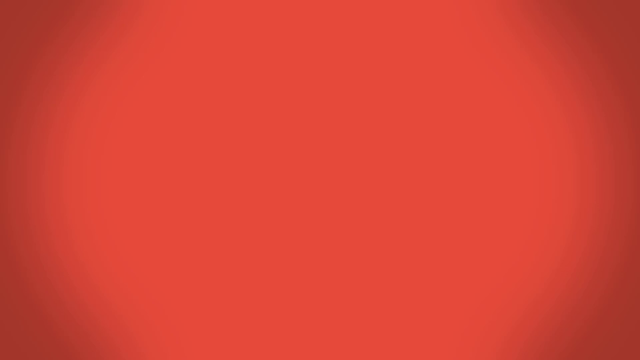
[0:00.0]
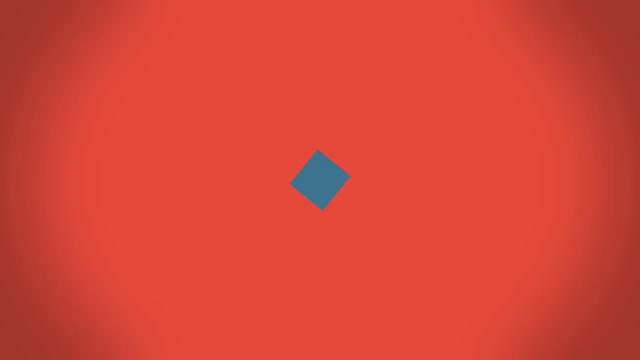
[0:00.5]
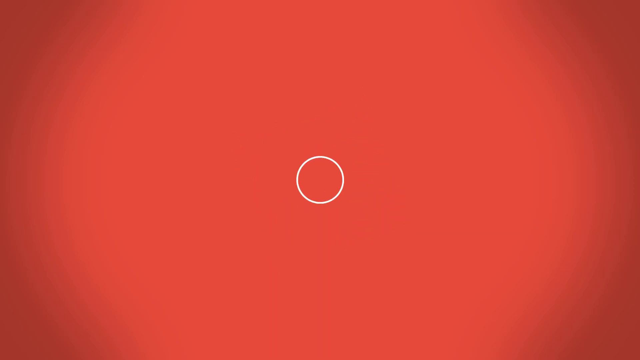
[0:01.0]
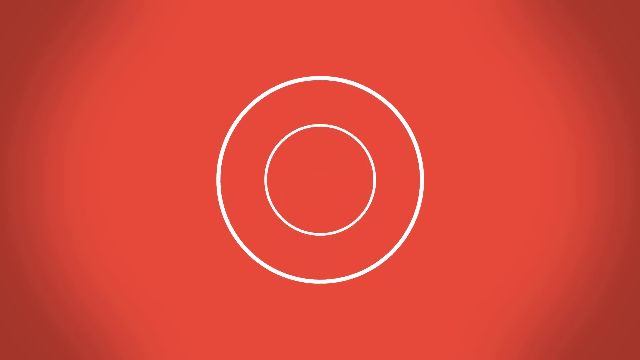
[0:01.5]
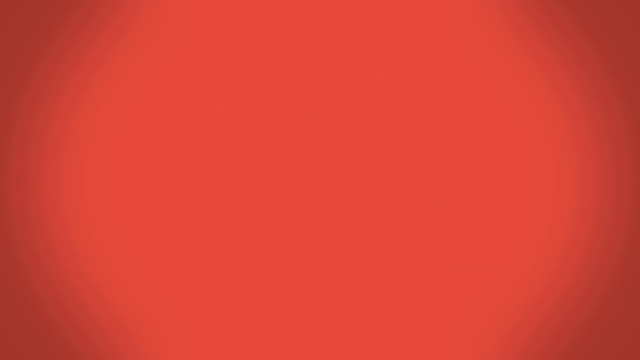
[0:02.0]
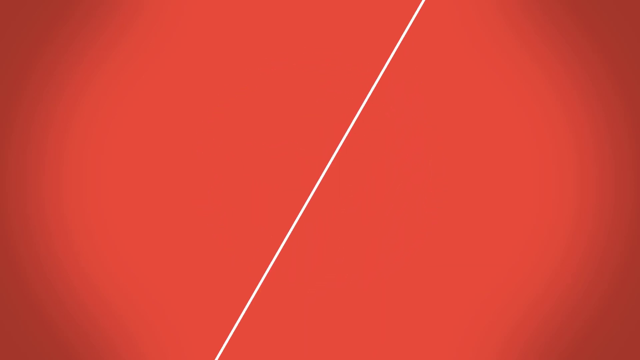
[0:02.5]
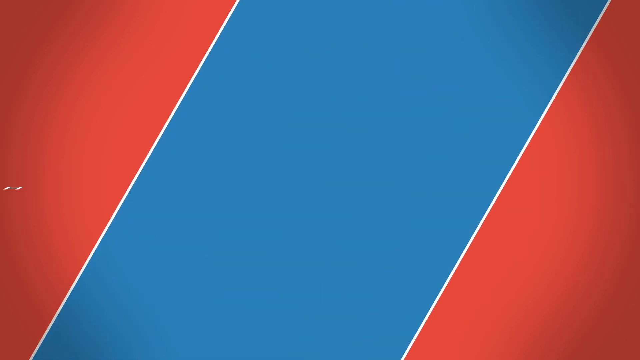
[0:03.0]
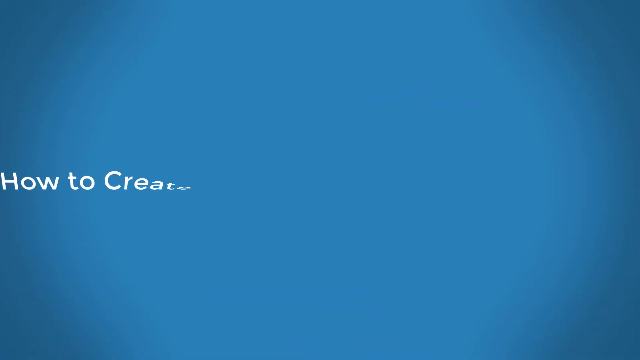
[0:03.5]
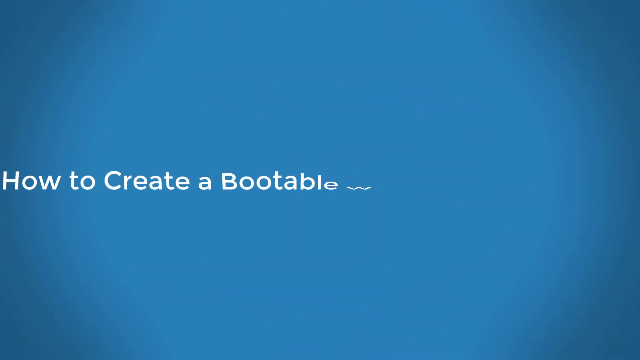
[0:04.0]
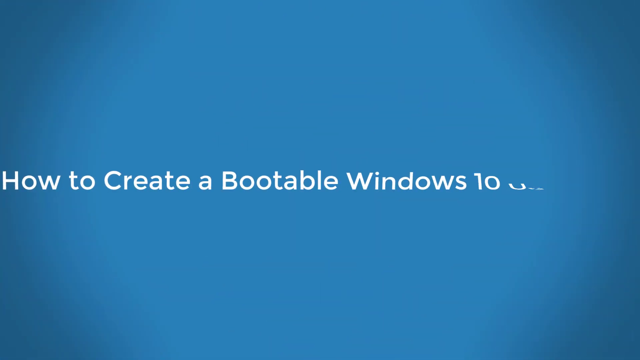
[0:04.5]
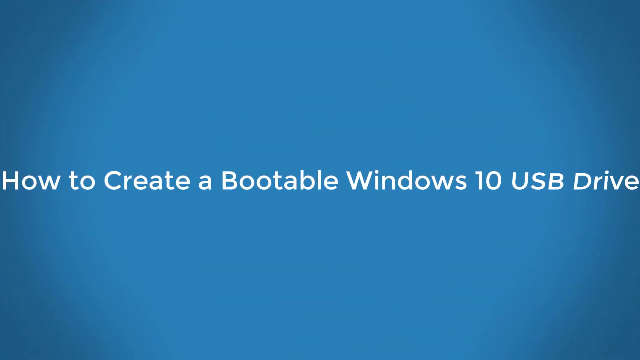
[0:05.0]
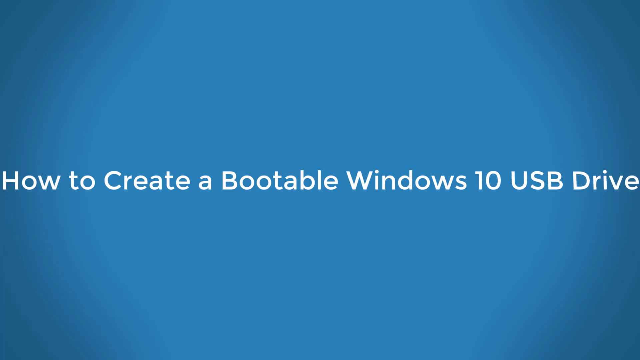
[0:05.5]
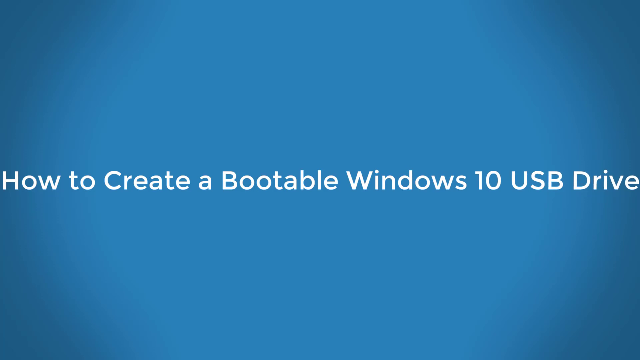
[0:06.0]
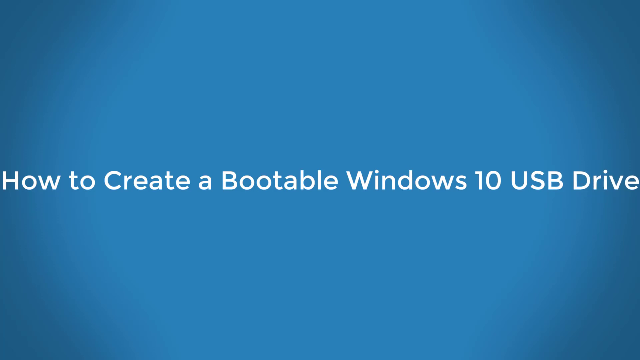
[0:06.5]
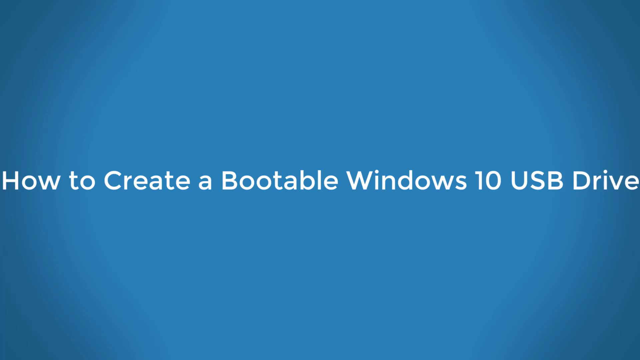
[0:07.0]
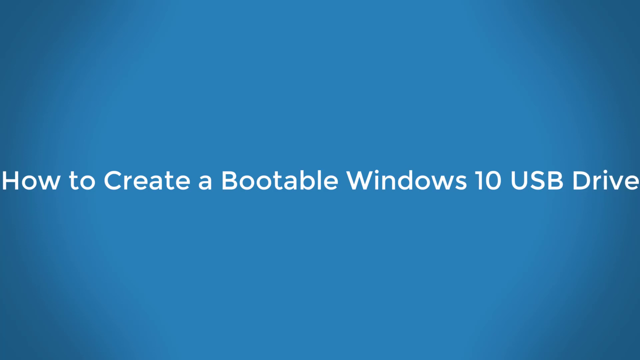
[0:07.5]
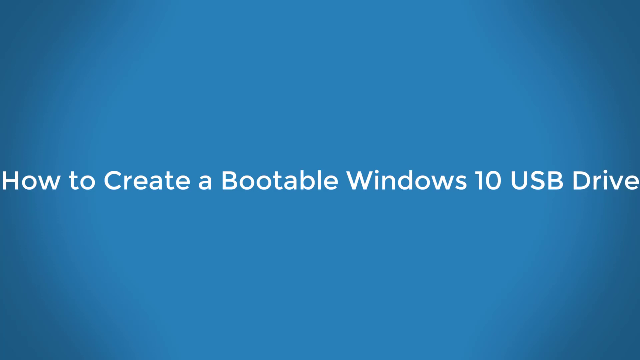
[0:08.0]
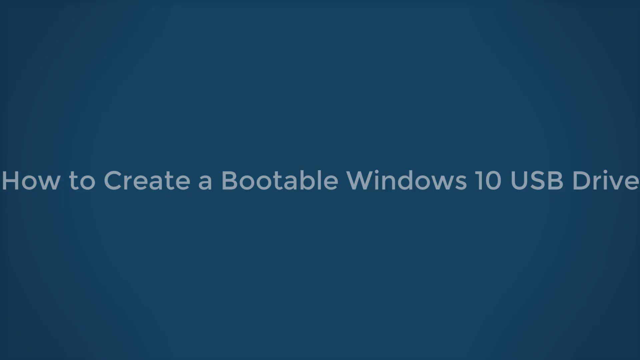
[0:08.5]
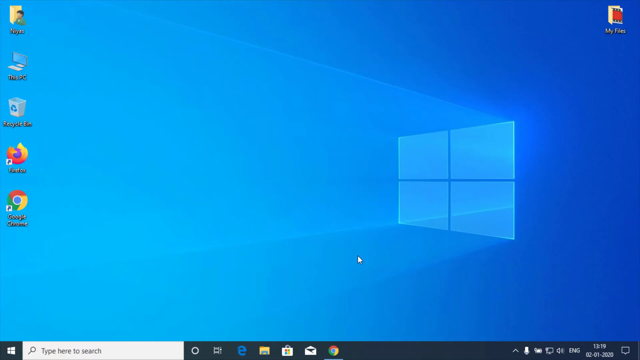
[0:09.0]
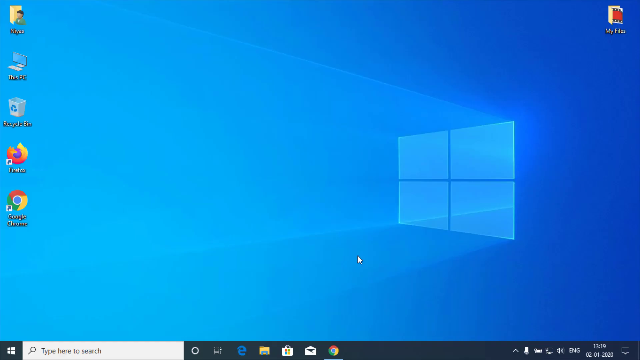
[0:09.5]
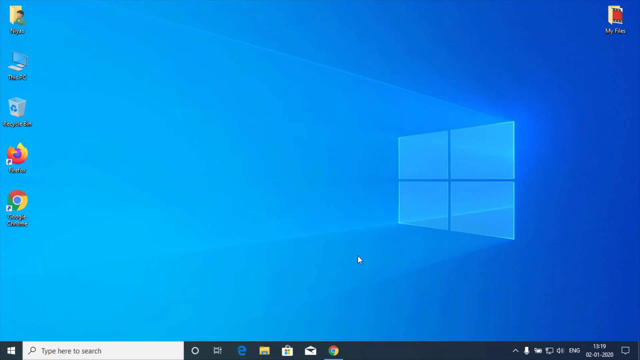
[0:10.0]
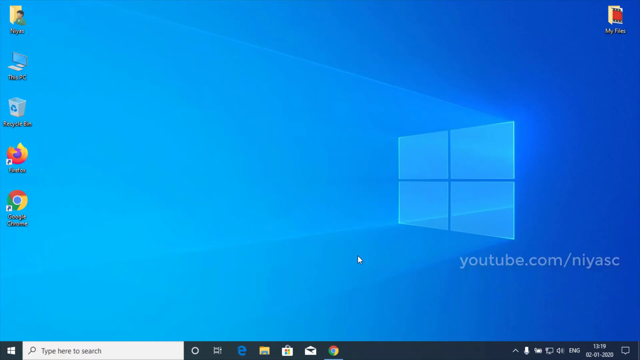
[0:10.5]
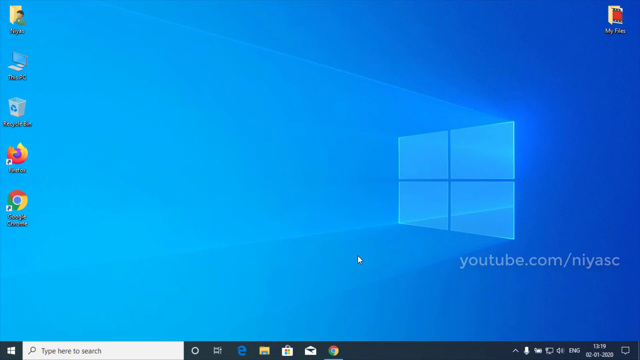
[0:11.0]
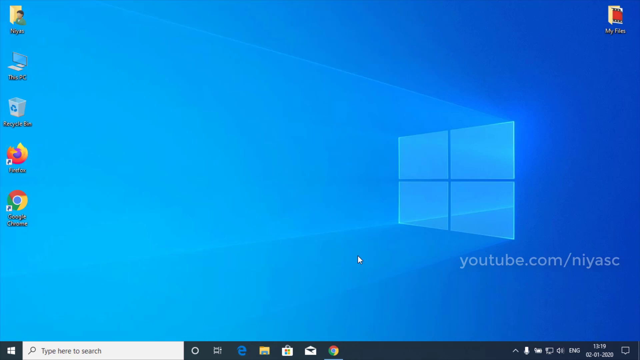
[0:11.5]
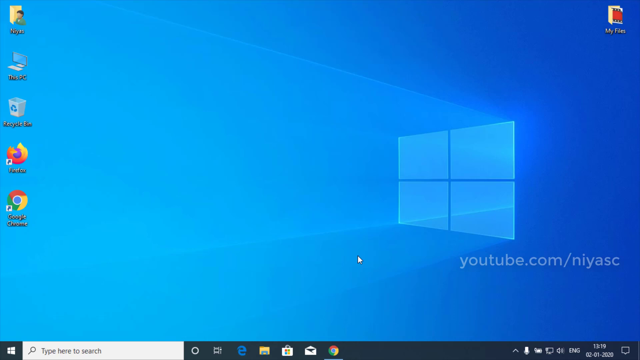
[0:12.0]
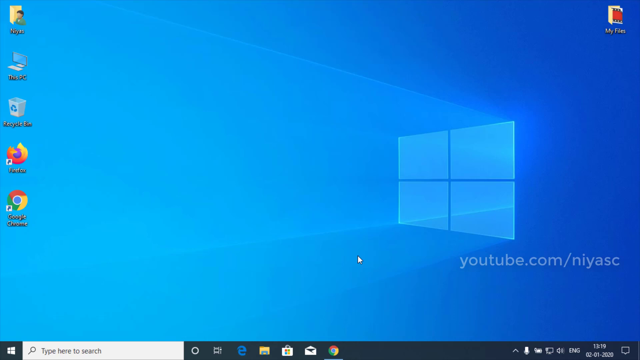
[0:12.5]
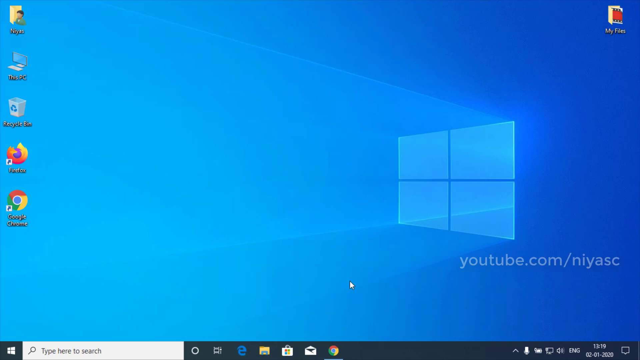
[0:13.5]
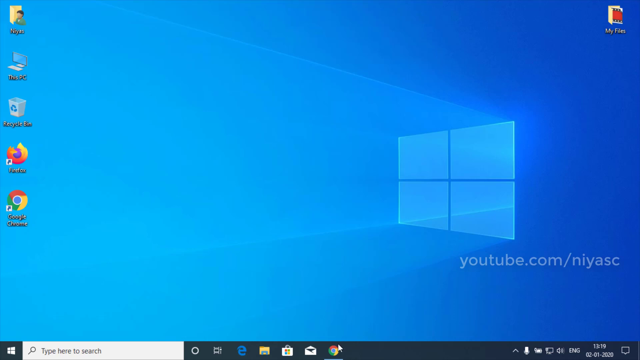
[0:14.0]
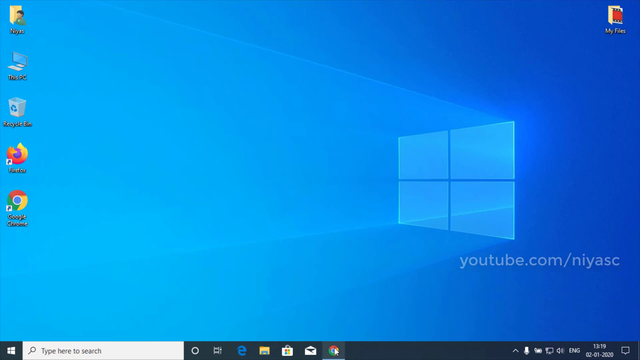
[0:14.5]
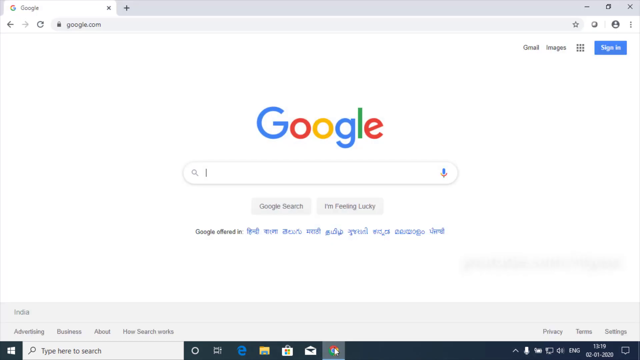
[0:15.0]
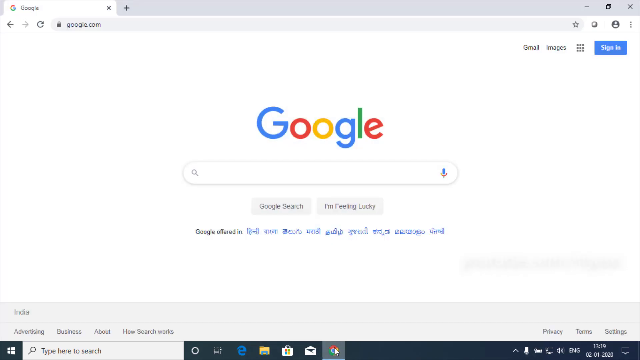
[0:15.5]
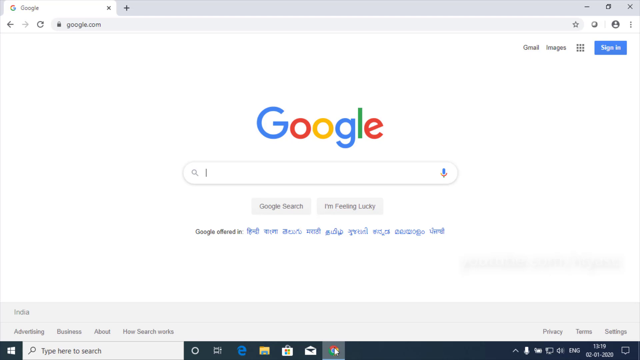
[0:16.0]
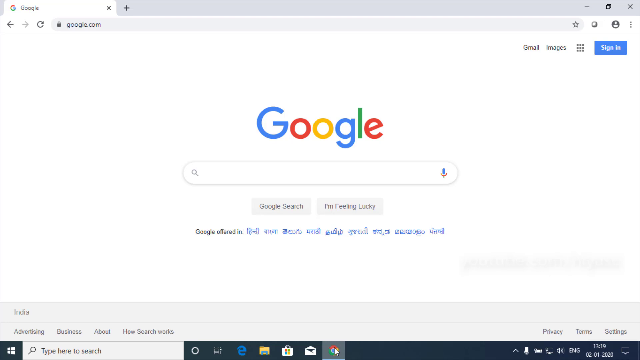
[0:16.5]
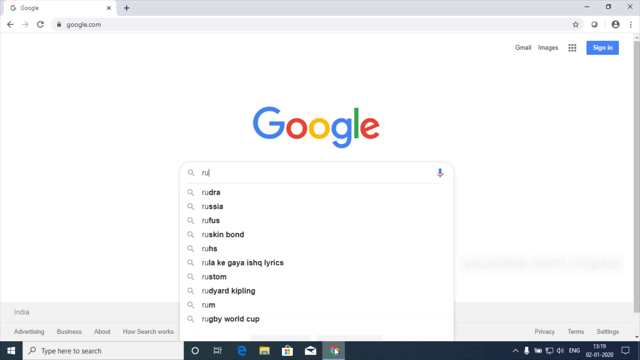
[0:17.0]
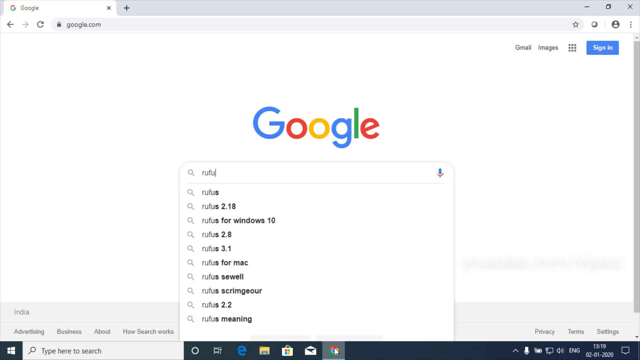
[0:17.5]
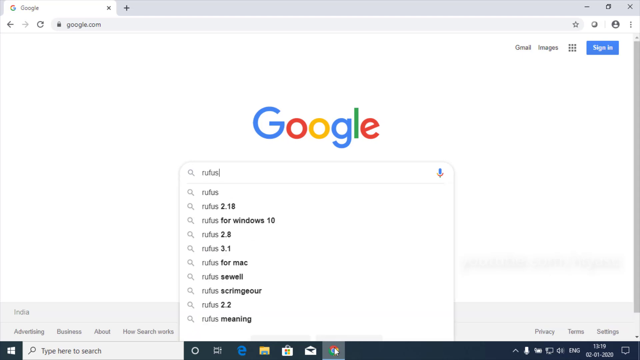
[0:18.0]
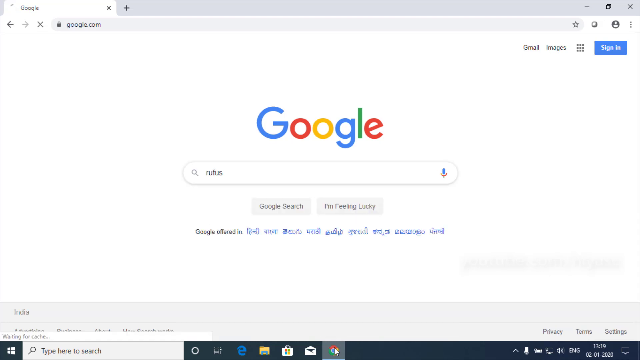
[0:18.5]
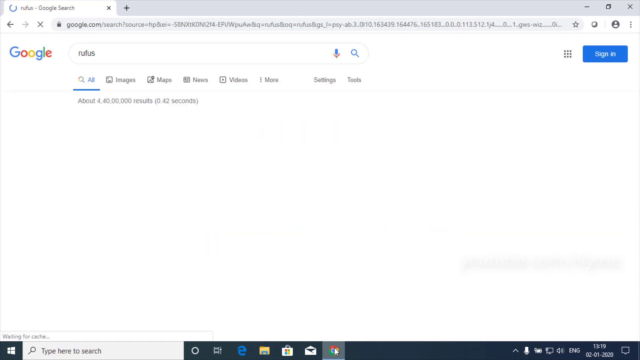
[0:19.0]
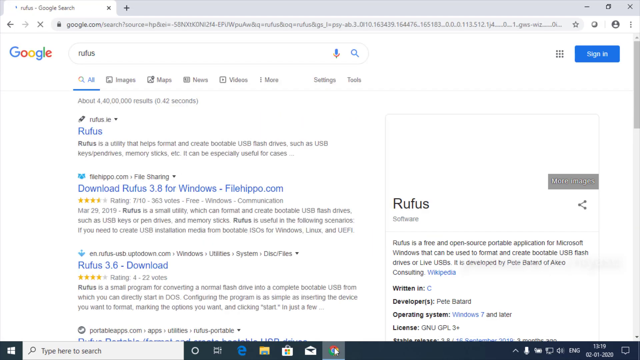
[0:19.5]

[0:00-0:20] The video opens on a pink, pinkish-orange background. A white circle logo appears and turns into a white diagonal line in the center of the screen, which opens up into a blue diagonal strip and then a blue screen reading "how to create a bootable Windows 10 USB drive" in white text horizontally across the center. The video cuts to a blue Windows computer home screen. On the left-hand side are five apps, including Google Chrome and Mozilla Firefox. The Windows logo is toward the right-hand side, and below it is a link reading "youtube.com/niyasc". The My Files app is in the top right corner. The user moves the cursor down to the bottom toolbar and clicks on Google Chrome. A Google screen appears, the user types "RUFUS" into the Google search bar and clicks the search button, and the Google results page loads with a series of results.